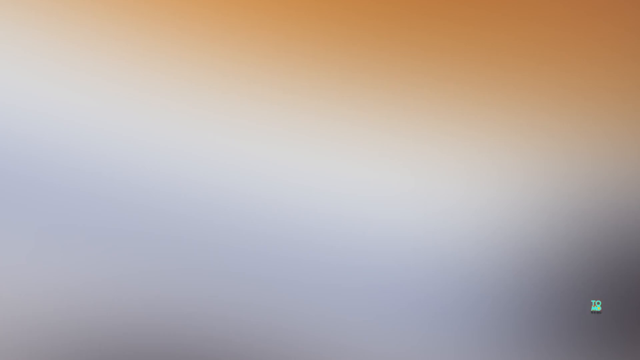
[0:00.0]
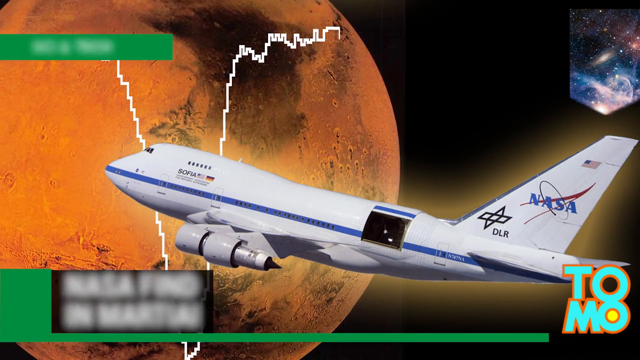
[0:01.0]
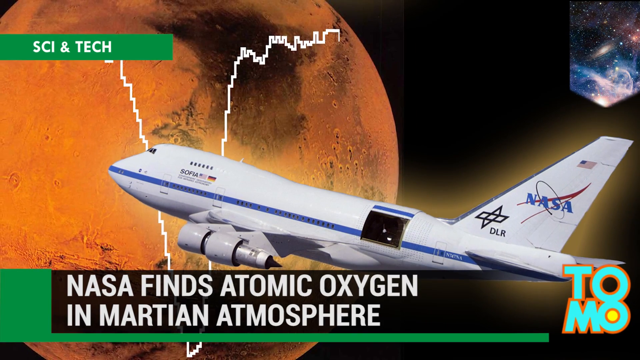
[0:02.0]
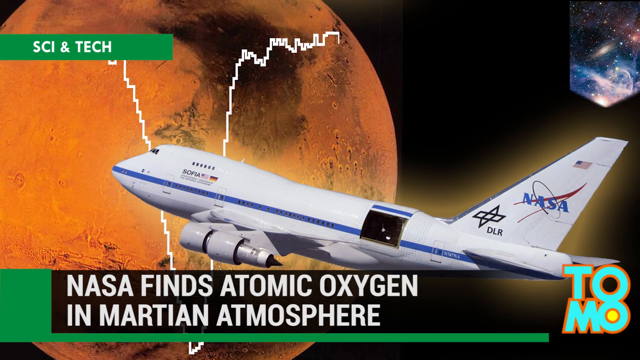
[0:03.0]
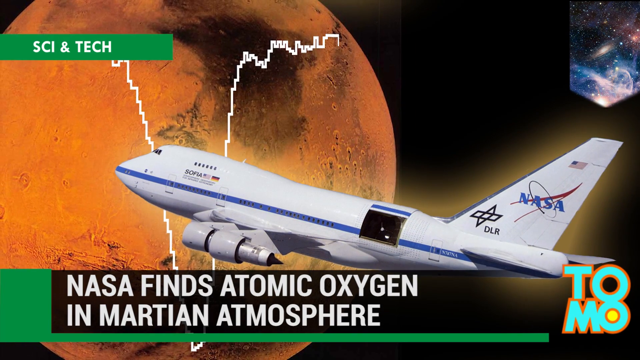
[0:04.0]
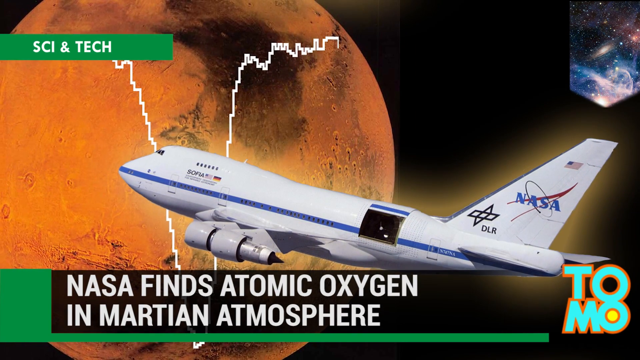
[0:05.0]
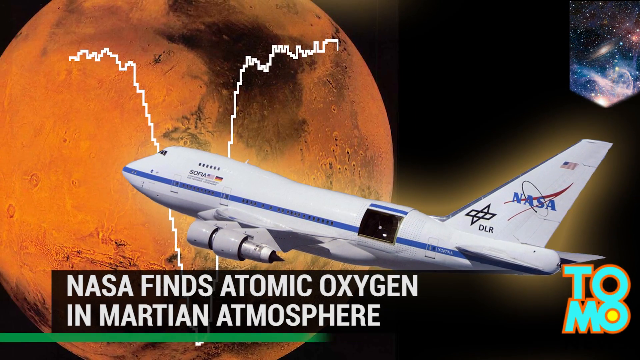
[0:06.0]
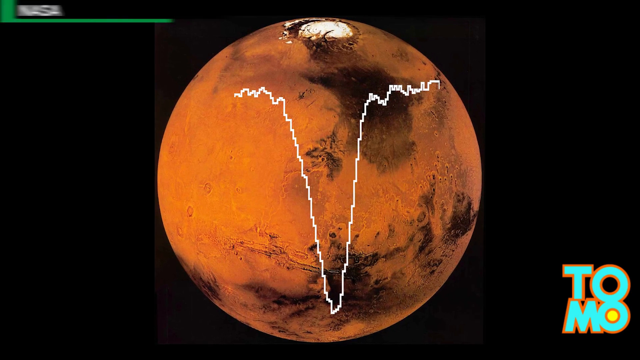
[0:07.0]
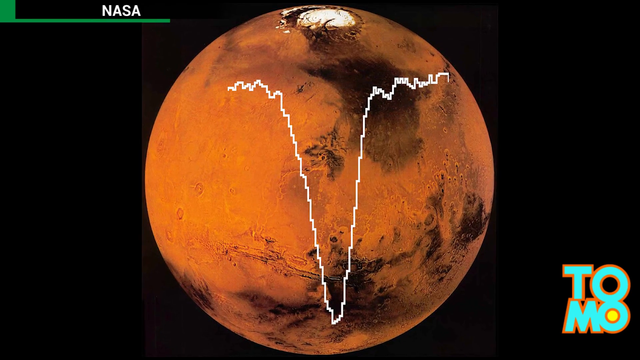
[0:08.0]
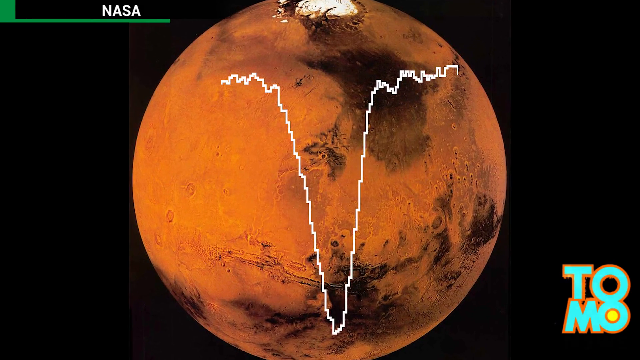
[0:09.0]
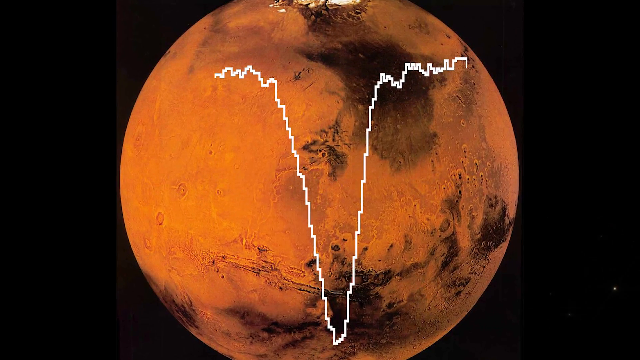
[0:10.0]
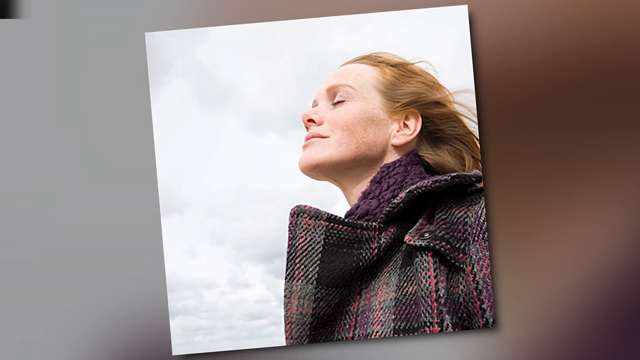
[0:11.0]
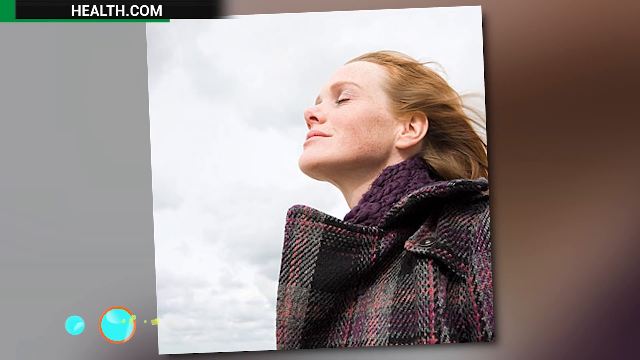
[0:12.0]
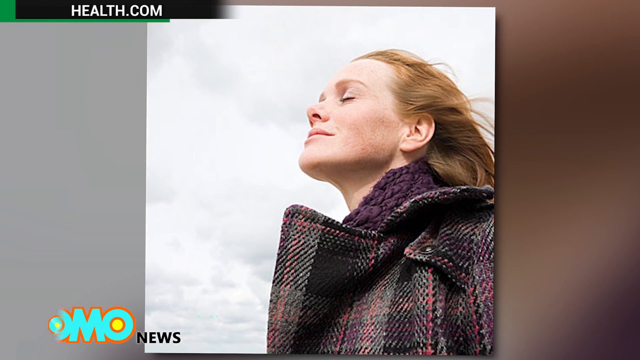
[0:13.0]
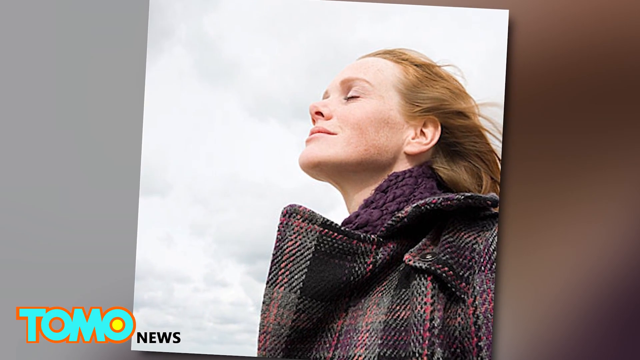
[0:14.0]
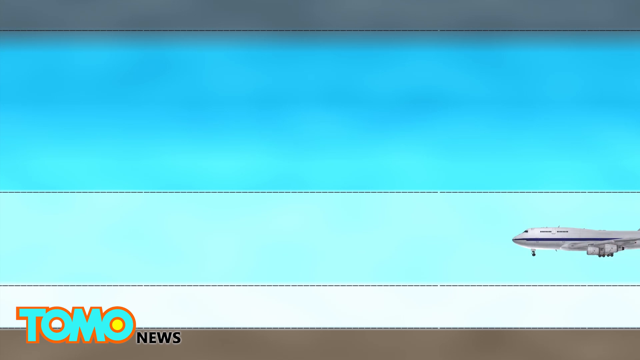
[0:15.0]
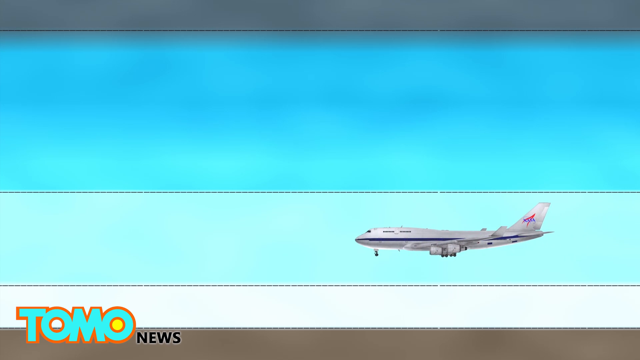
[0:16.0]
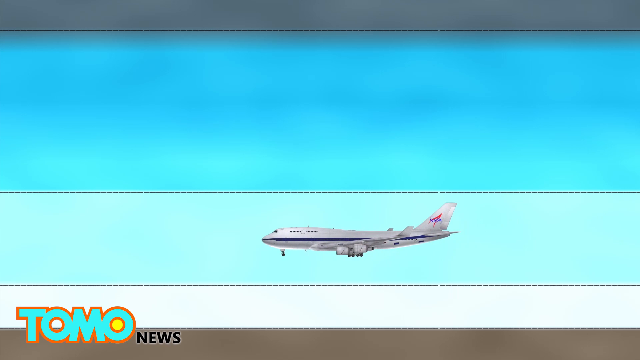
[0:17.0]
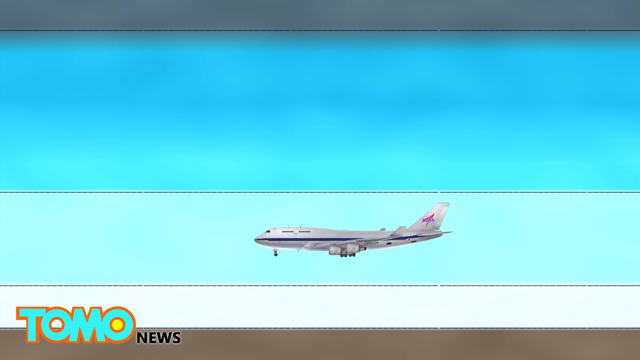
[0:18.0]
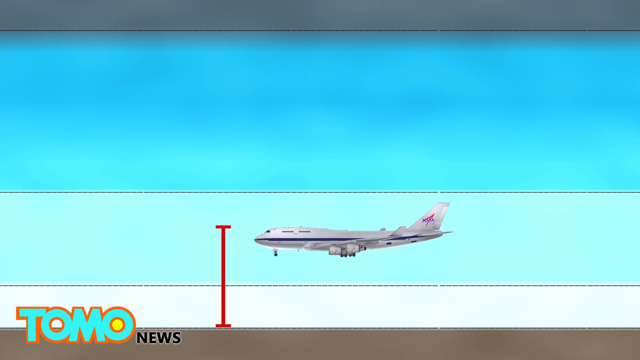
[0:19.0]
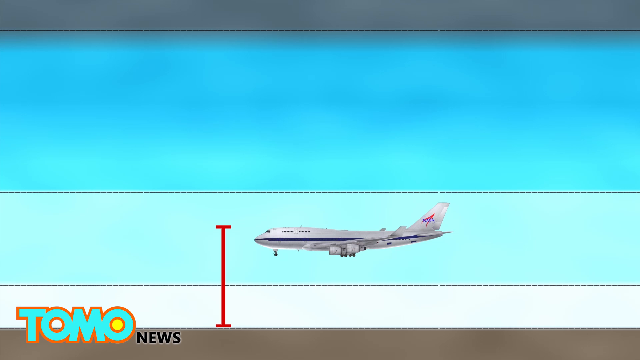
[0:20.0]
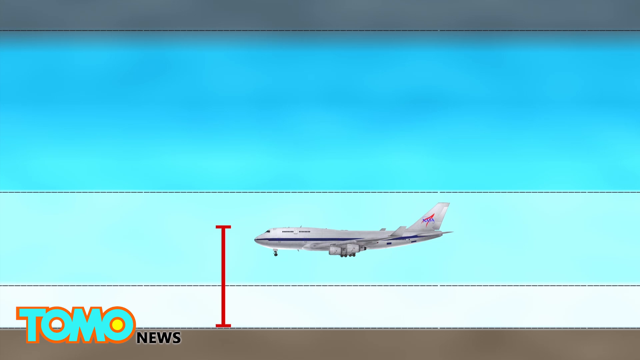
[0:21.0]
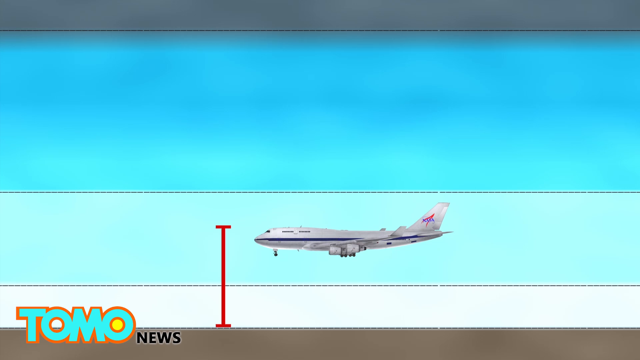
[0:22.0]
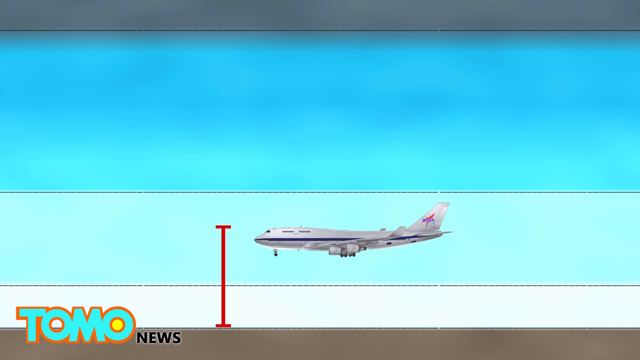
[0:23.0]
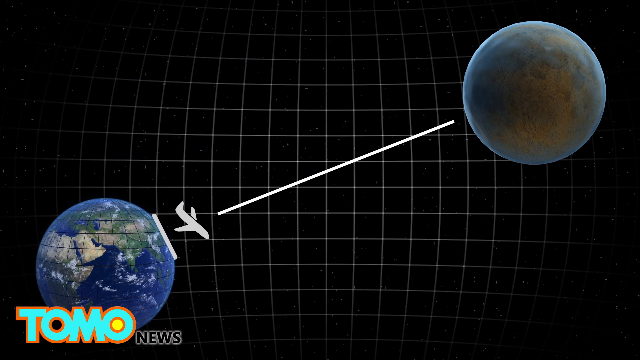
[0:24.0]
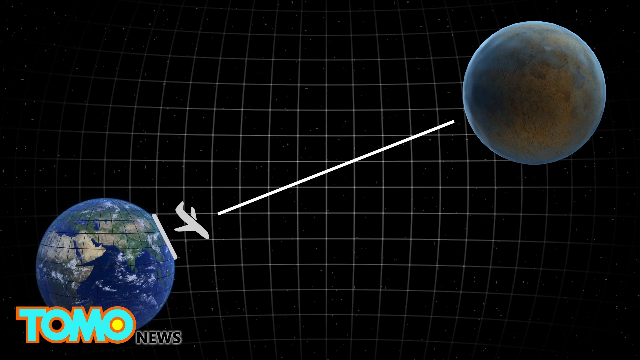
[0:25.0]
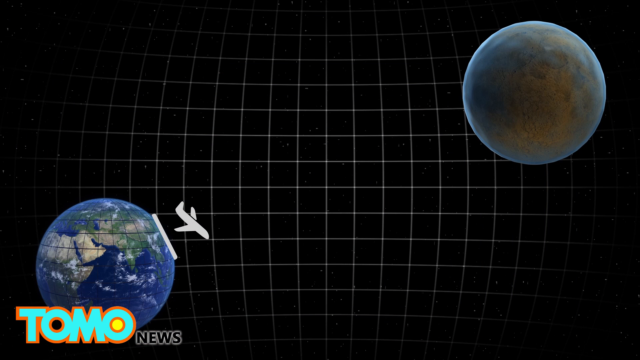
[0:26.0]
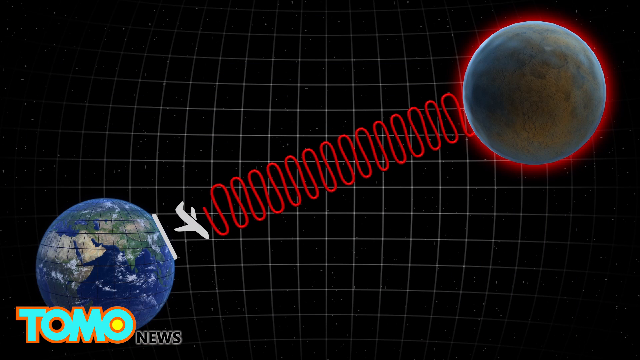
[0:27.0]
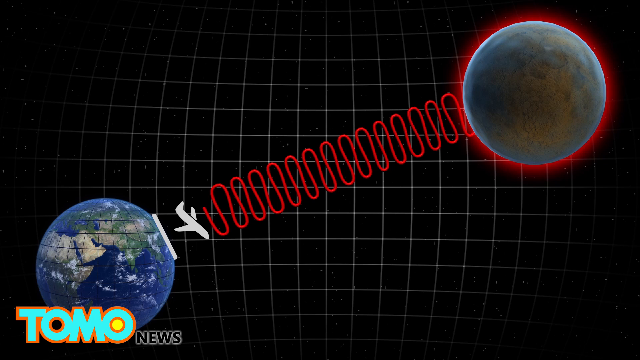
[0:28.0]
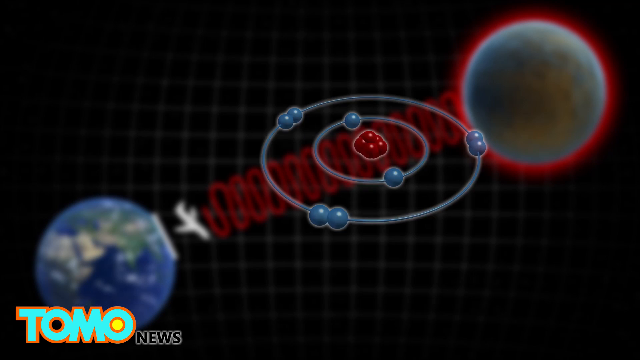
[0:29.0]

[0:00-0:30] A sphere, orange in color, is shown with NASA. A lady looks up into the air; she wears a black jacket and has blonde hair. An airplane is shown in the sky, and a red line points to the sky. Two spheres are visible along with a small drawing of a plane. Science and technology are shown on the screen. The airplane is white with a blue stripe along its margin. The separation between the Earth and the atmosphere is shown above. The airplane is very big and white, and it moves through the air.